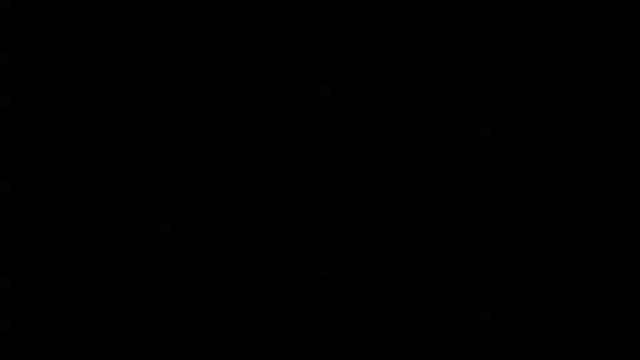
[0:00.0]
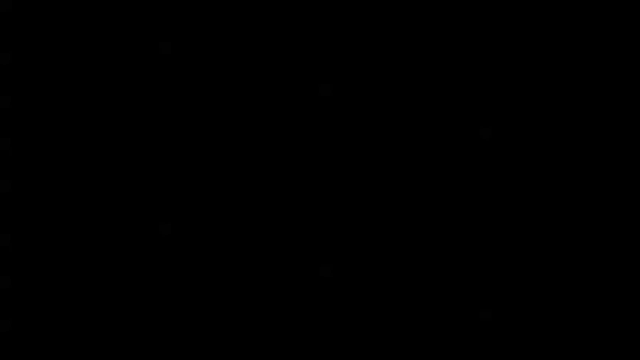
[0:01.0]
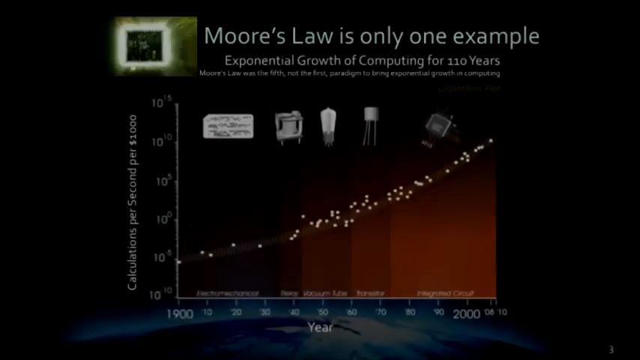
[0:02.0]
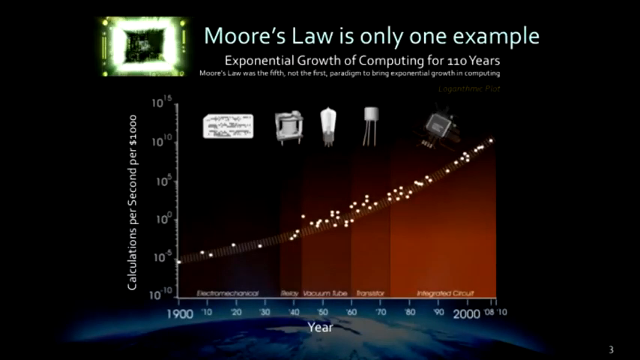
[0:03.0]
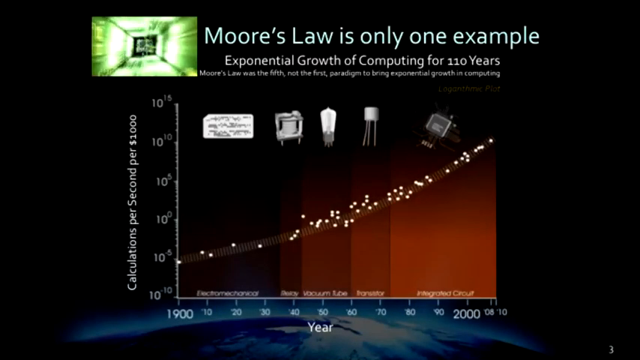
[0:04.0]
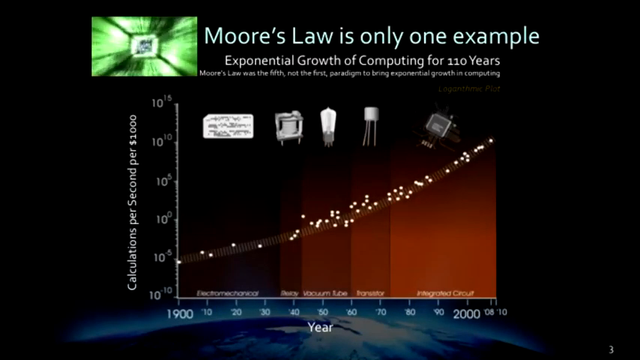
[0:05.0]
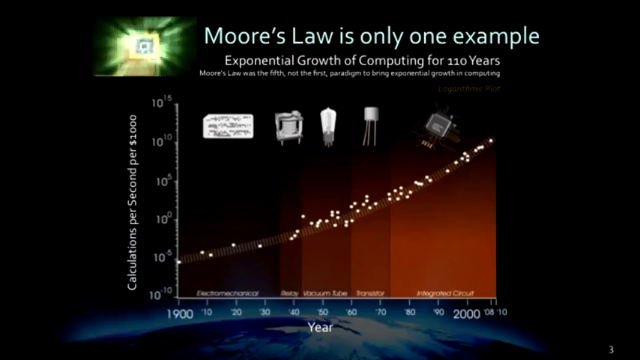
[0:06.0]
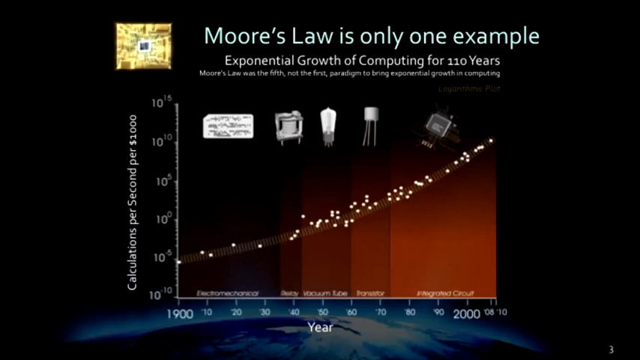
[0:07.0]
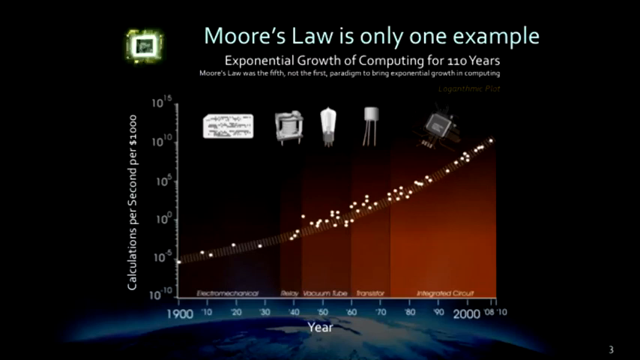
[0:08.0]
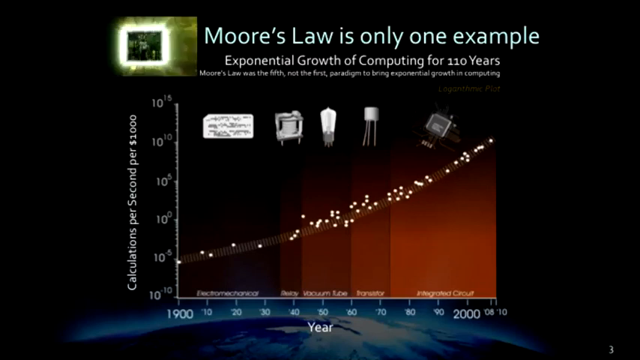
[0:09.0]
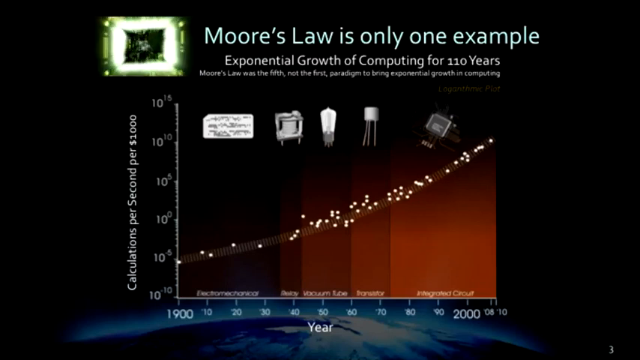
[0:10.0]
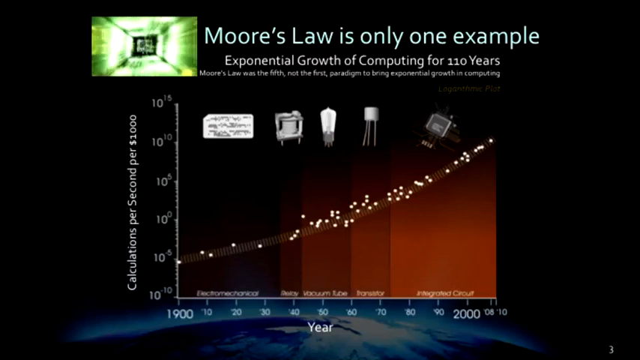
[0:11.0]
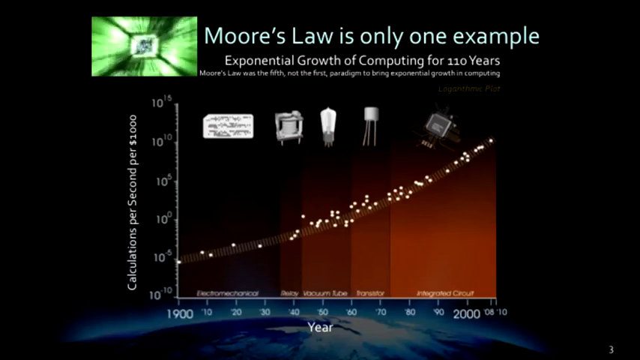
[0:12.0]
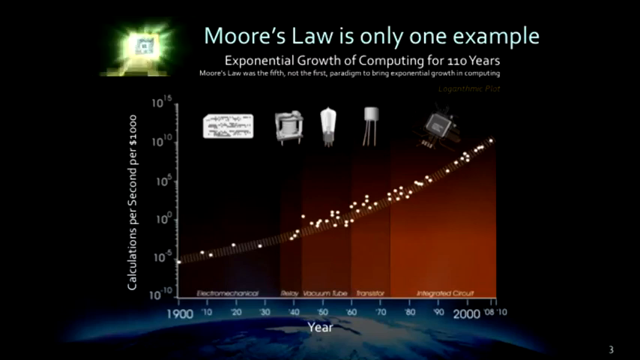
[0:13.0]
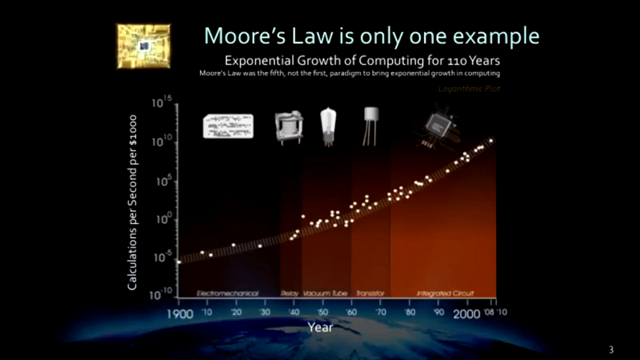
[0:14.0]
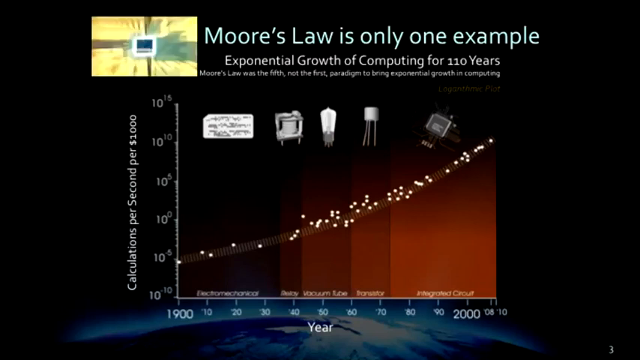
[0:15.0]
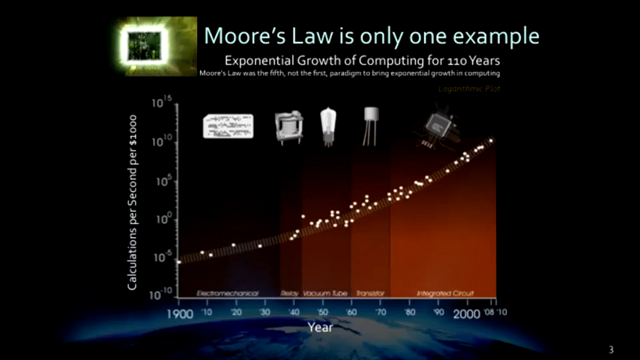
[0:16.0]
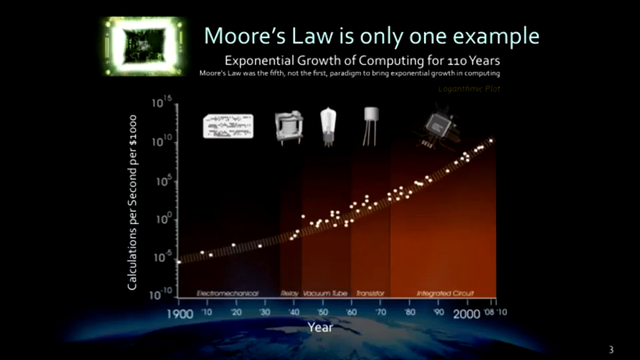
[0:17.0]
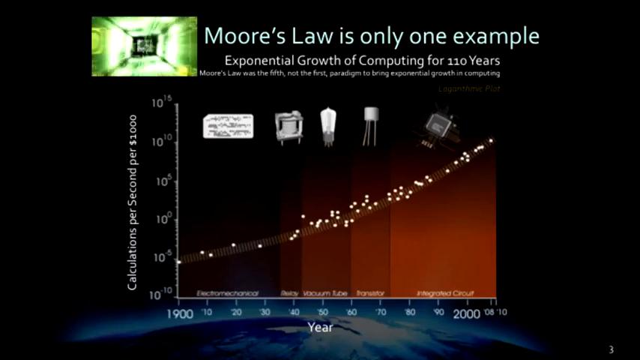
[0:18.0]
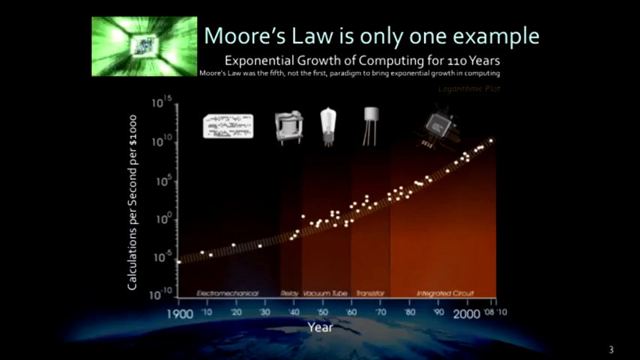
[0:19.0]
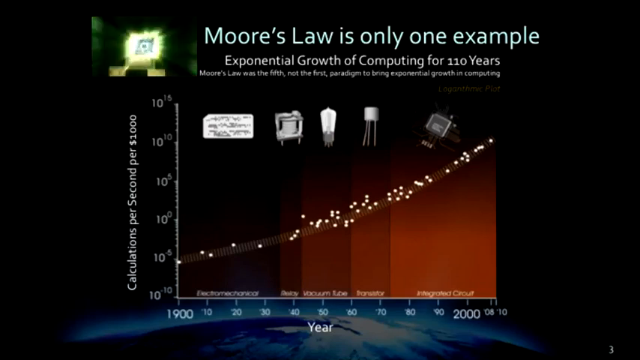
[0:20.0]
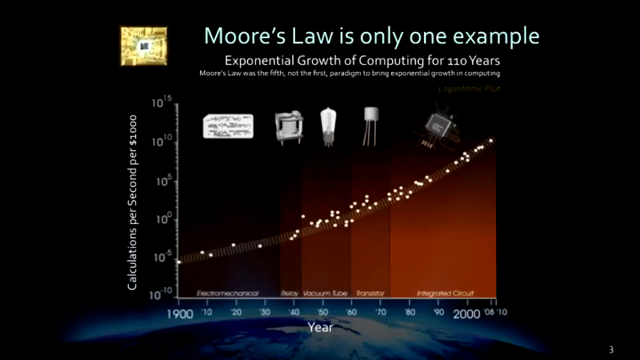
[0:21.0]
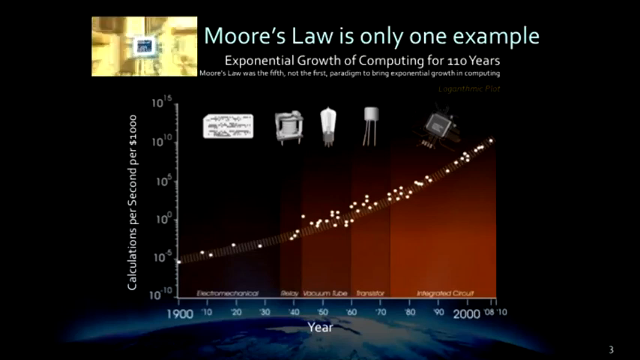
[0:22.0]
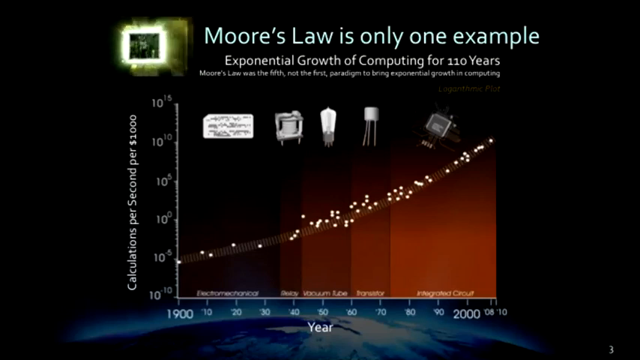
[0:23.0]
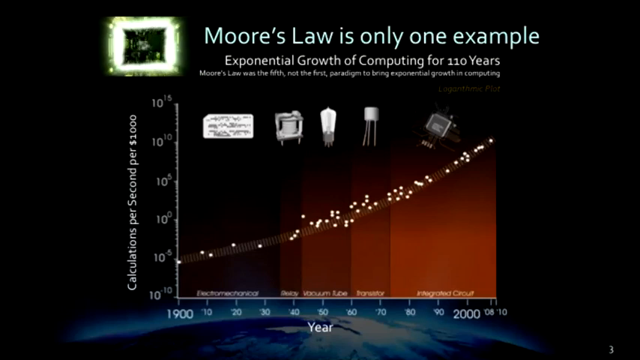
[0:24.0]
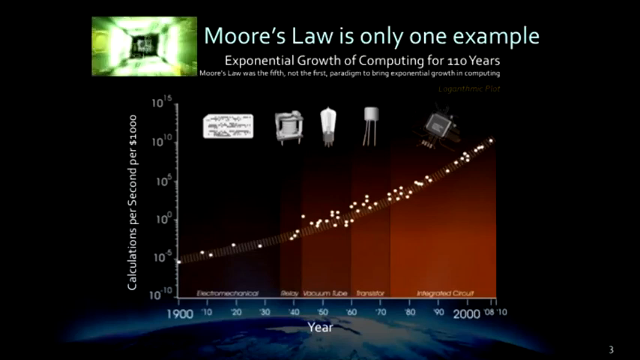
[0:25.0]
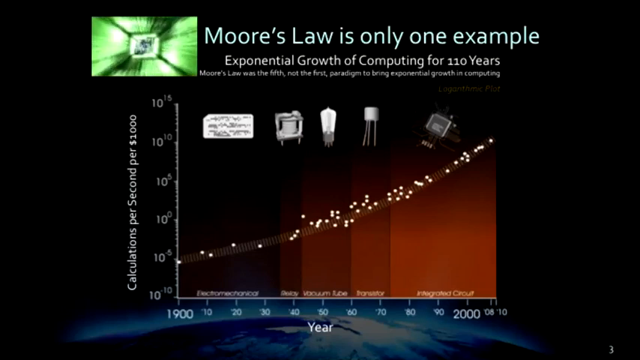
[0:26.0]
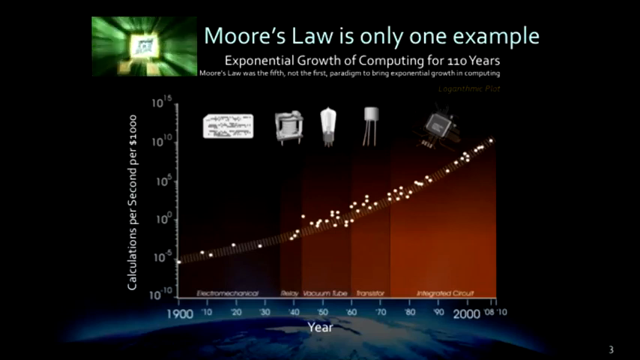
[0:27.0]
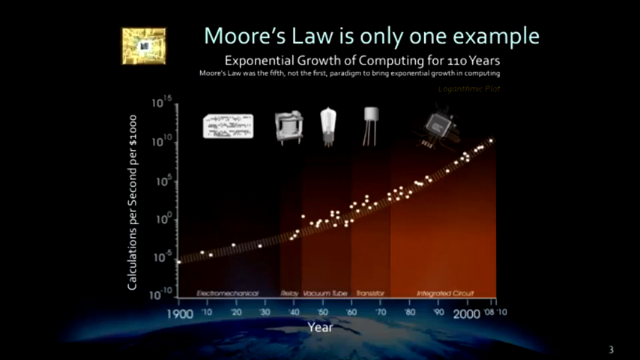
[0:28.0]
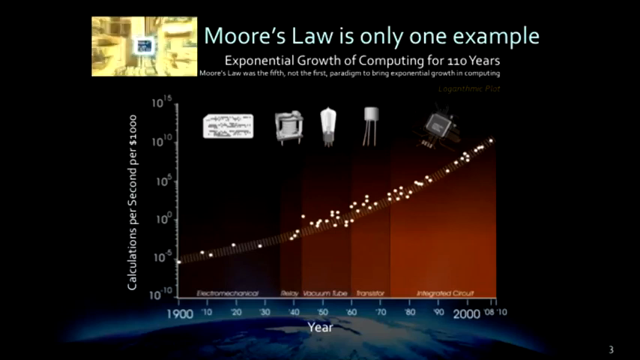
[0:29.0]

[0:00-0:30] The section uses a single slide as its background, with an animation in the top left-hand corner that cycles through various colors. It is kaleidoscope-like, with a square in the center that seems to imply transistors or ICs. The slide reads "Moore's law is only one example" and "Exponential growth in computing for 110 years." A graph has calculations per second per thousand dollars on the y-axis and year on the x-axis, with years such as 1910 and 1920 marked. It shows linear growth on a logarithmic y scale. Pictures along the graph progress from what appears to be paper and pencil, to what seems to be some kind of switch, to a vacuum tube, to a transistor, and then to something like a MOSFET transistor. At the top of the graph, something indicates linear versus log.